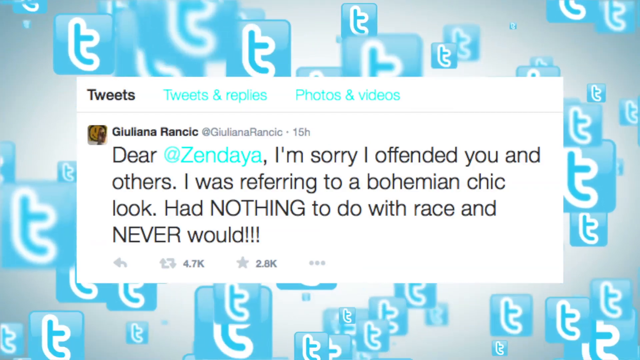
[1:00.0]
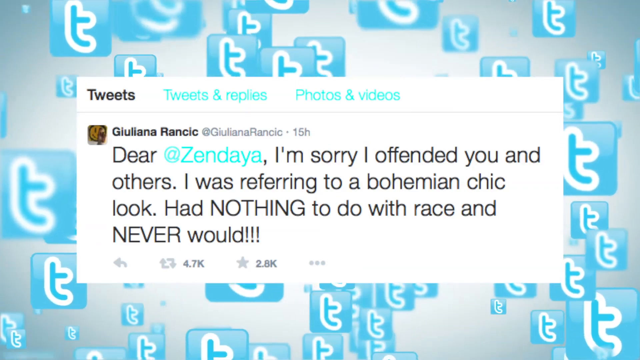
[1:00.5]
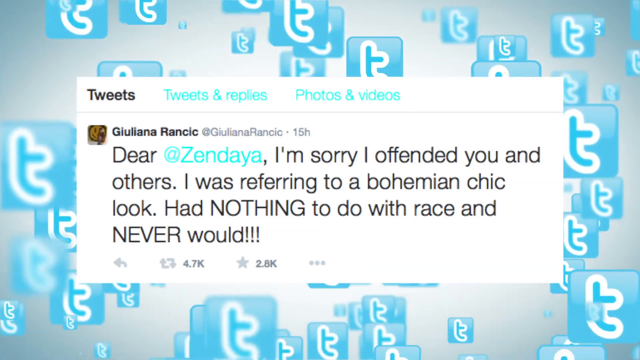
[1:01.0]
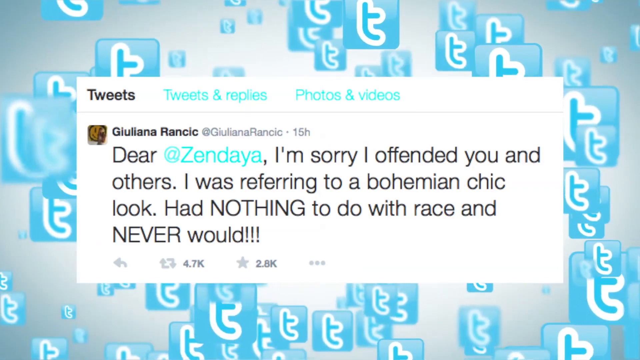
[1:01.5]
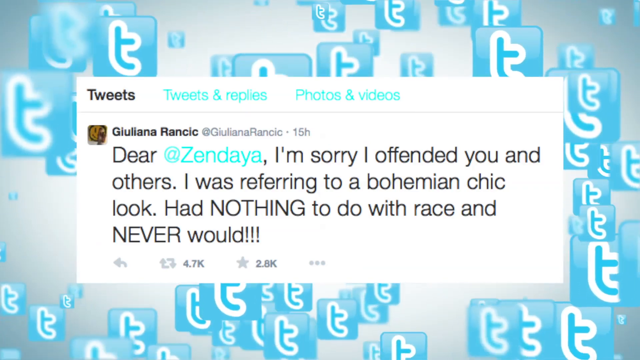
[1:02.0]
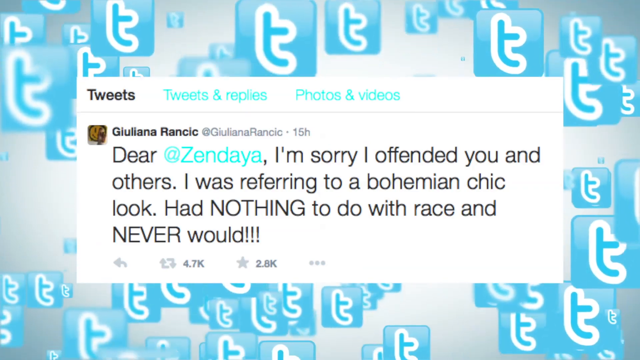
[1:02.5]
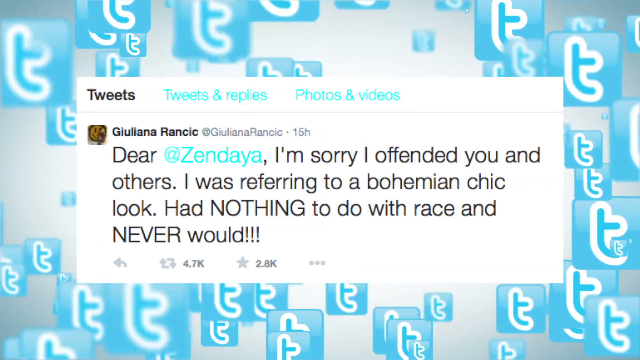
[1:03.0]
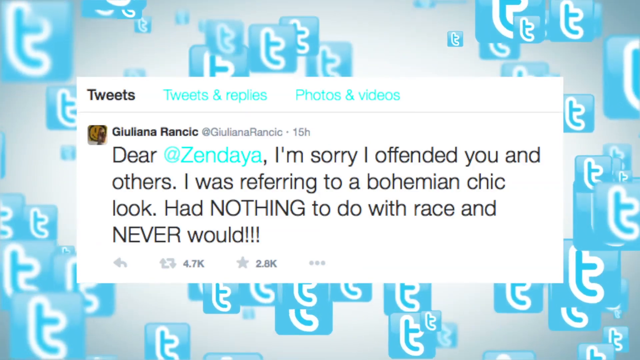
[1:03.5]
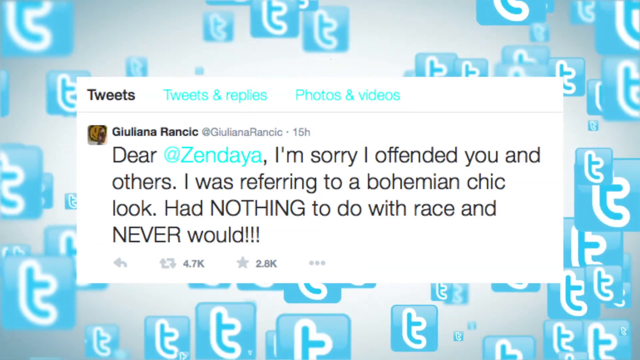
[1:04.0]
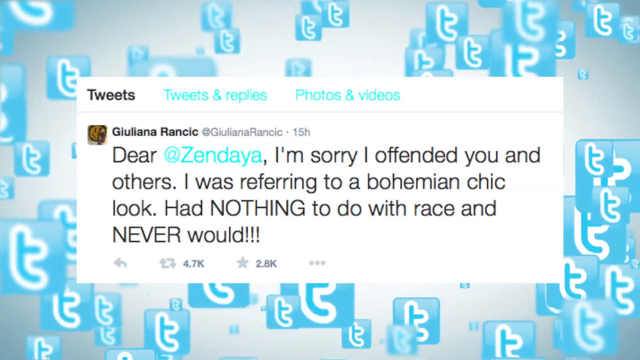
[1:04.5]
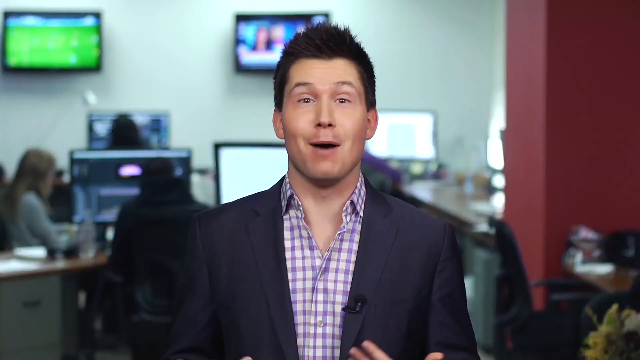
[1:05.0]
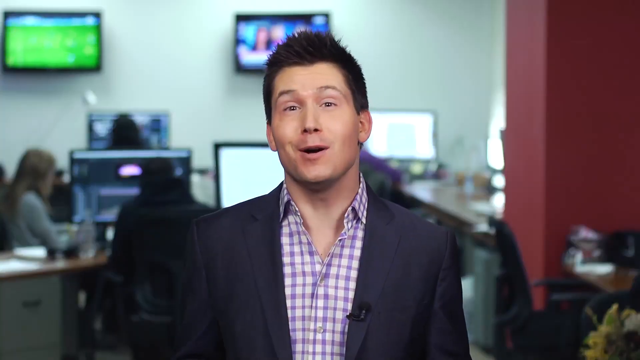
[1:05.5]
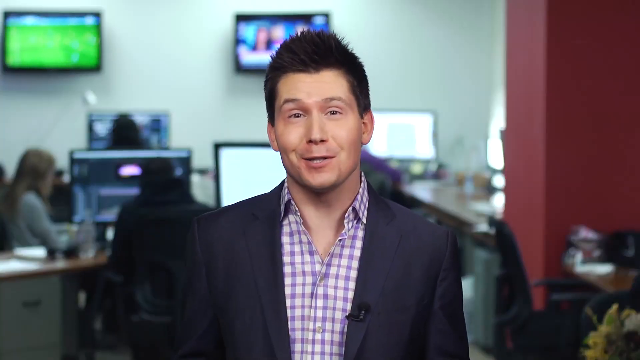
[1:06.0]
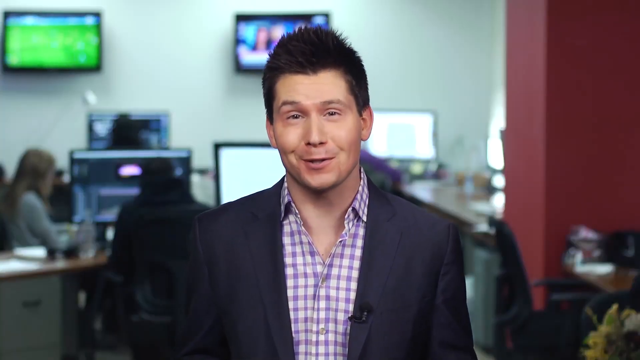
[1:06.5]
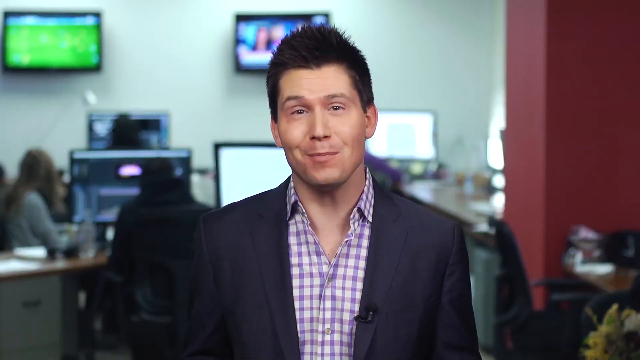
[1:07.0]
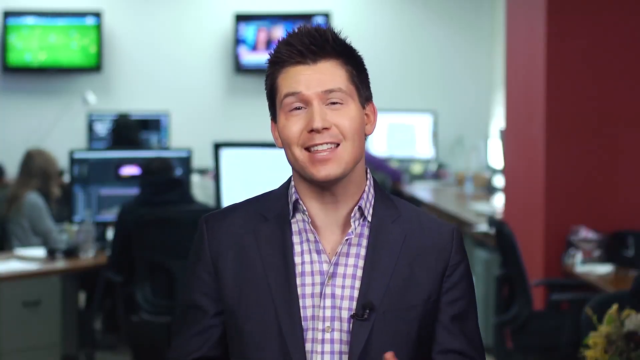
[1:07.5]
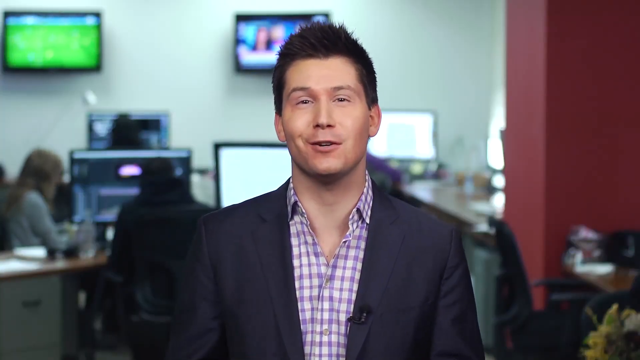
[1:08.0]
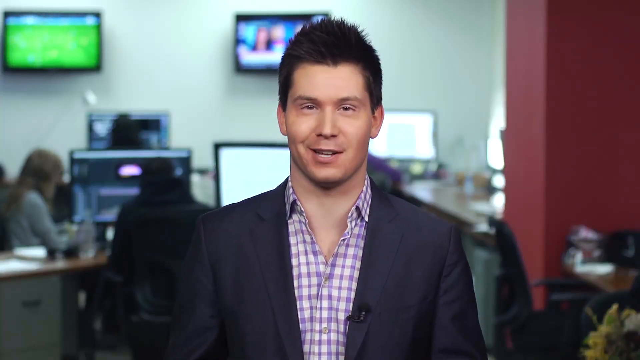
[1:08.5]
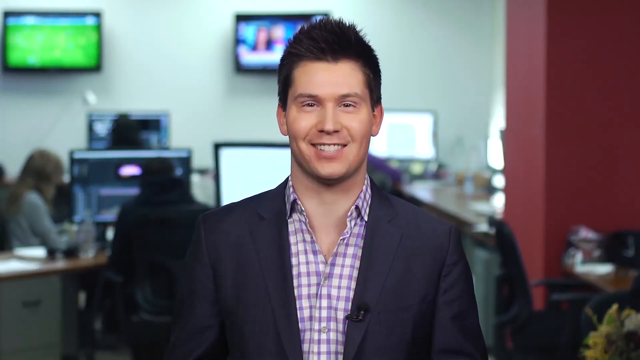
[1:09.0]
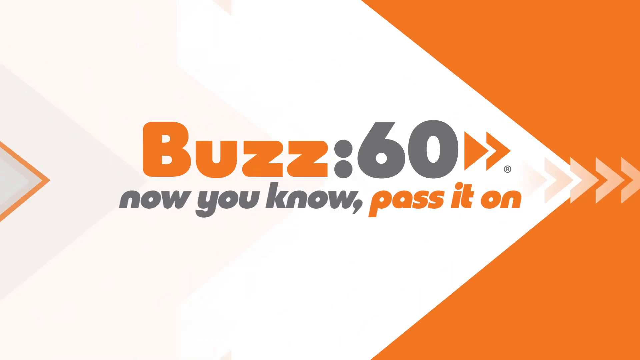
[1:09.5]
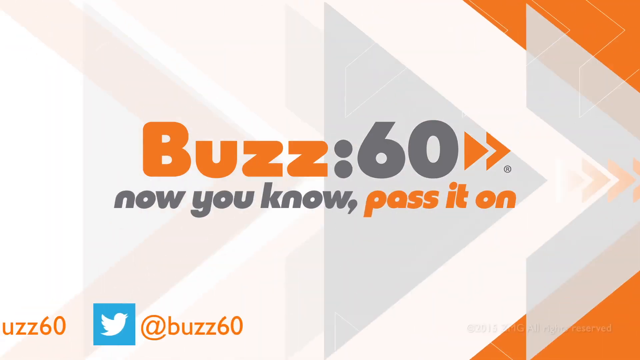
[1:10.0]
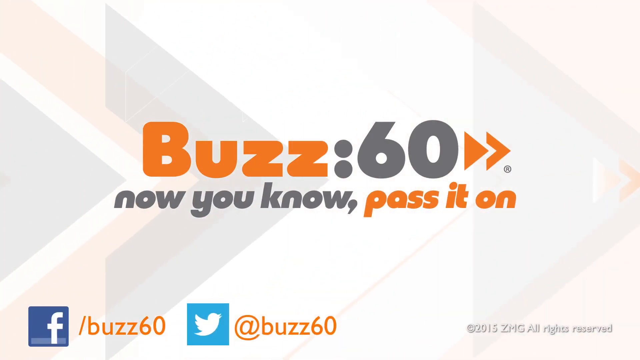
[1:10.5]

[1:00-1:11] A tweet from Guyana Rancic, posted 15 hours ago, reads "Dear Zendez, I'm sorry I offended you and others. I was referring to a Bohemian chick look, had nothing to do with the rest", with the numbers 4.7K and 2.8K. Behind the message is an old Twitter sign with a blue T. The news reporter is reporting about it on Buzz 60.